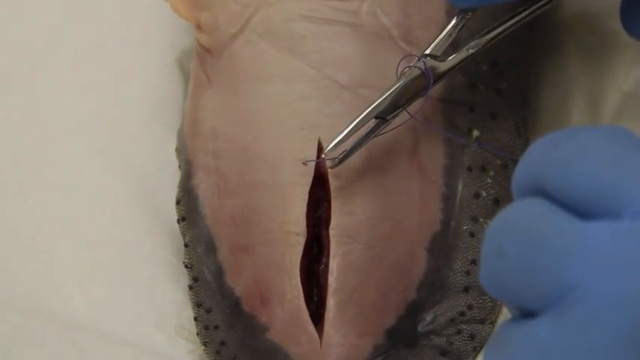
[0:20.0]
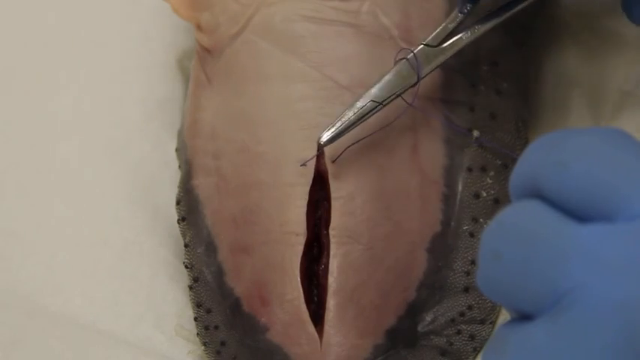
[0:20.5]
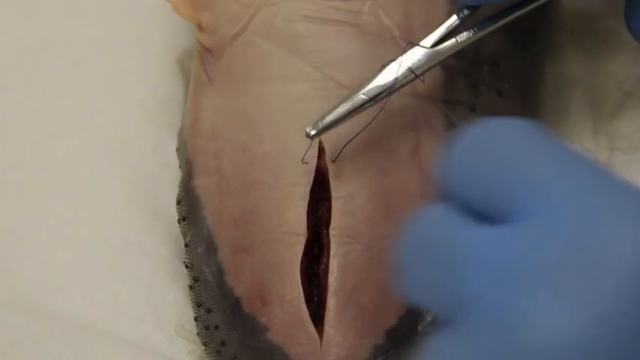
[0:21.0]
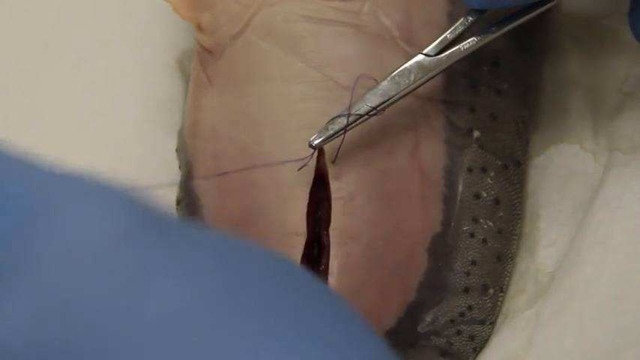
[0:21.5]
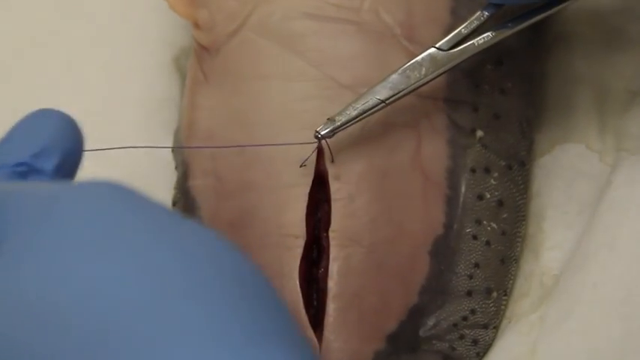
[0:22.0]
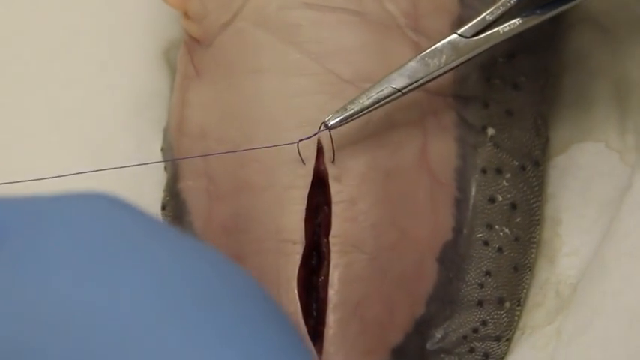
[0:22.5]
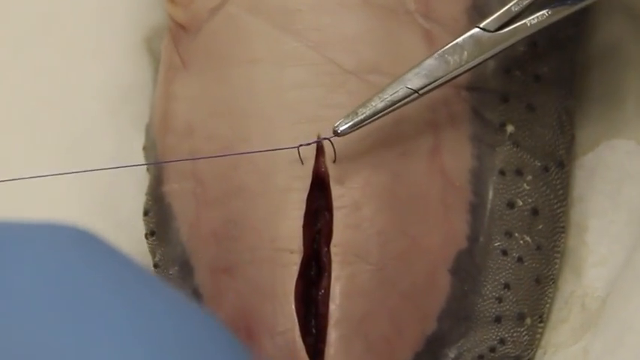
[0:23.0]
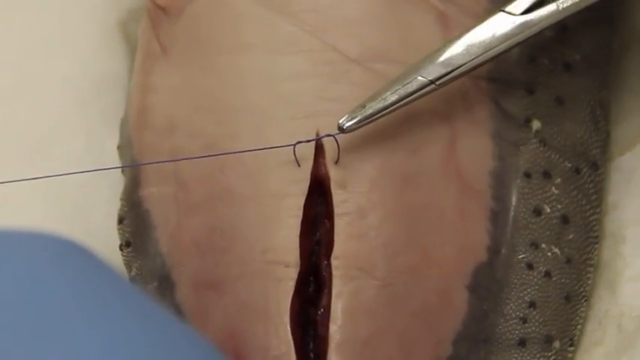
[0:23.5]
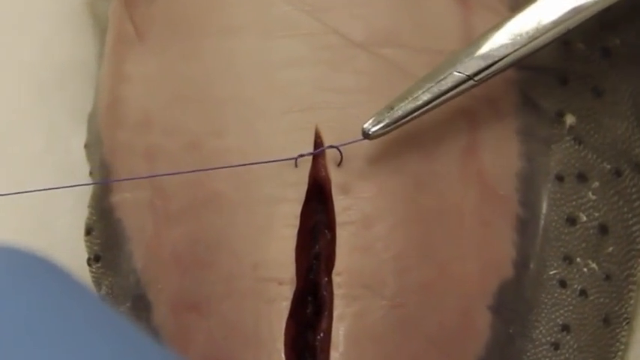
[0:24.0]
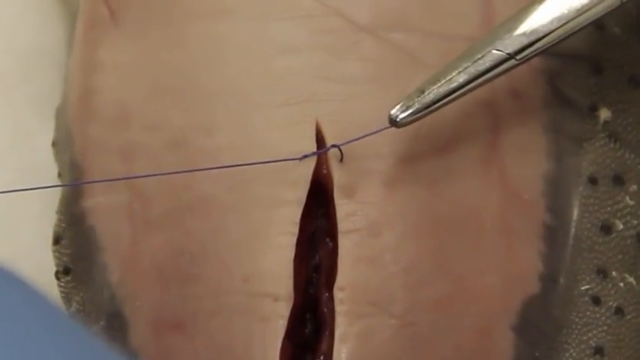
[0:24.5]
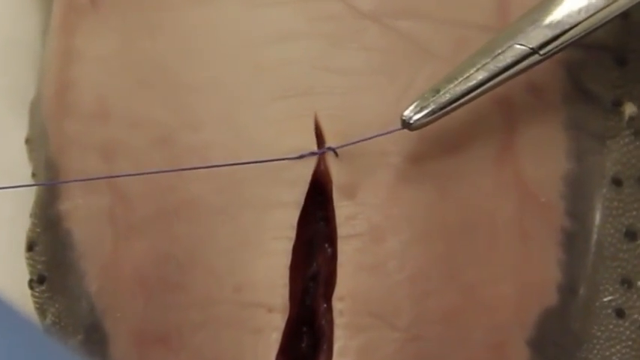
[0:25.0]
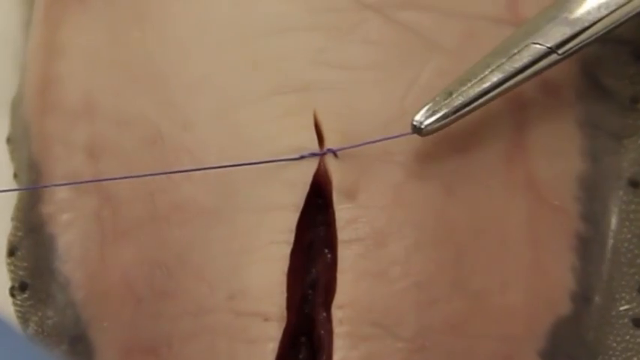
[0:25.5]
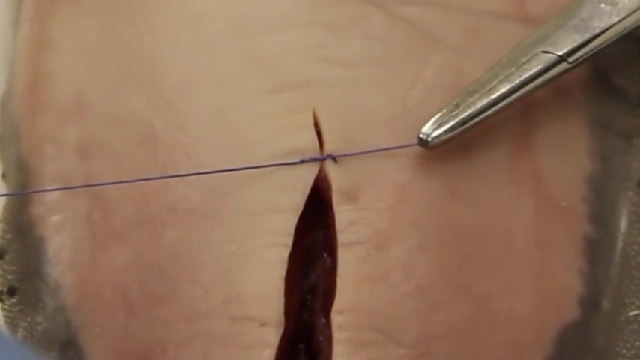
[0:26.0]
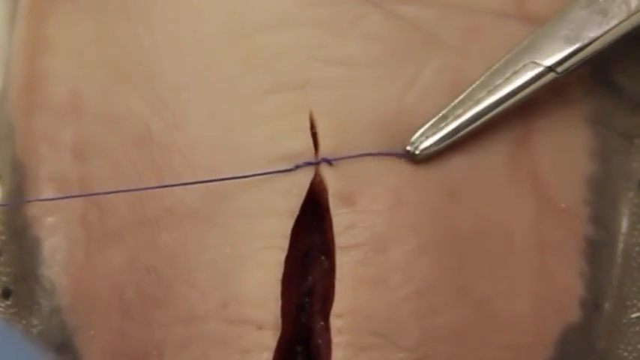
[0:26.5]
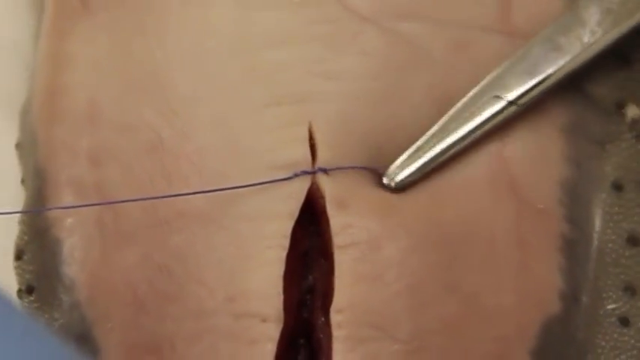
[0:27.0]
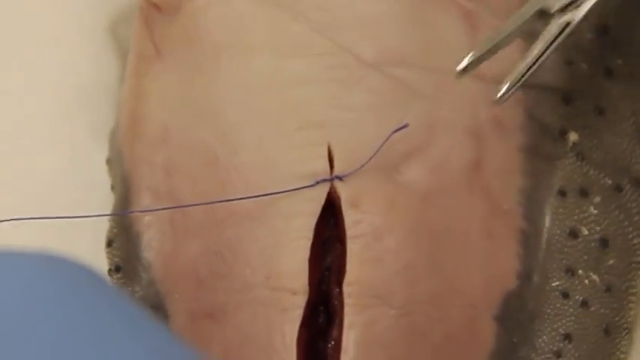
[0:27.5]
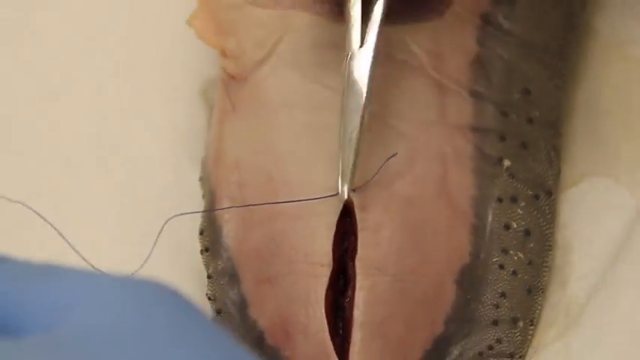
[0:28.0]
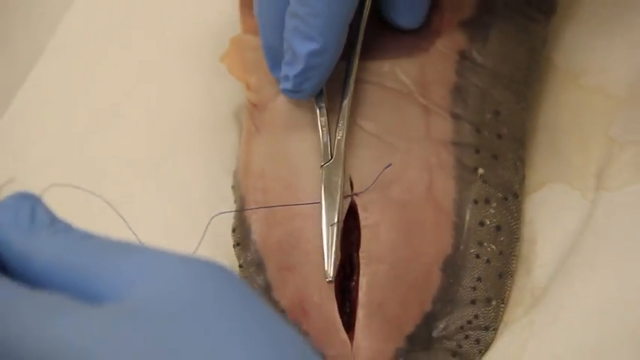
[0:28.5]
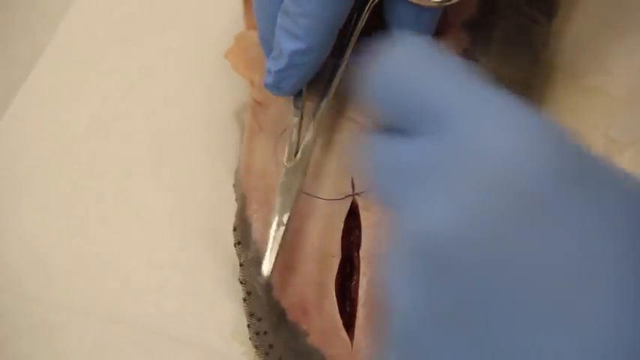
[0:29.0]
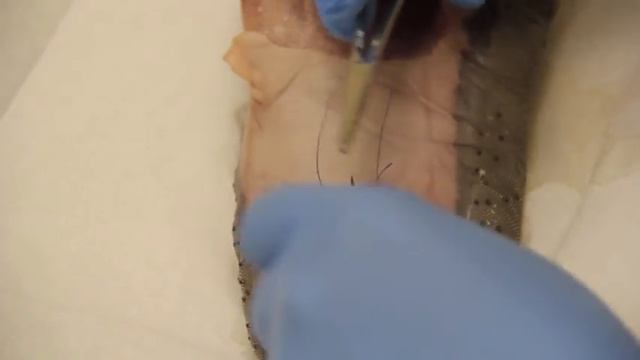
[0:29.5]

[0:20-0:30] The doctor ties a knot, the first one made like tying shoelaces. He works one part with what looks to be tweezers with a scissor handle and the other part with his gloved hand, pulling the surgical wound closer together. He pulls it tight, loops it through and pulls it tight again, one side with the tweezers and one side with his hand. He then loops the sutures around the base of the tweezers, which are suture tweezers with scissor-type handles. He pulls the wound tight and loops the suture around, beginning the square knot that closes the cauterized surgical wound.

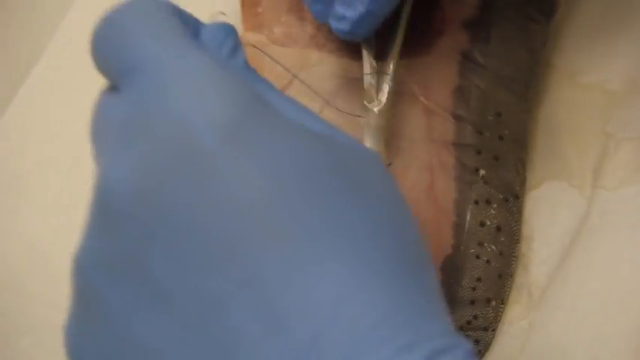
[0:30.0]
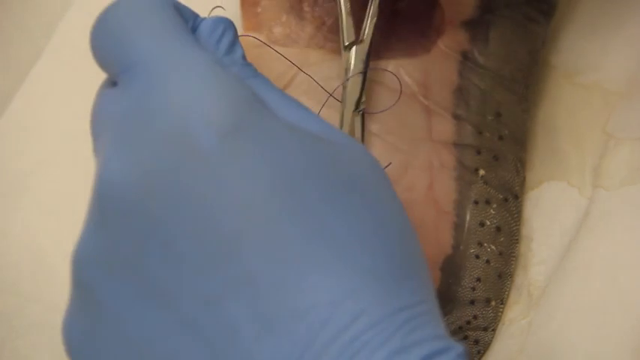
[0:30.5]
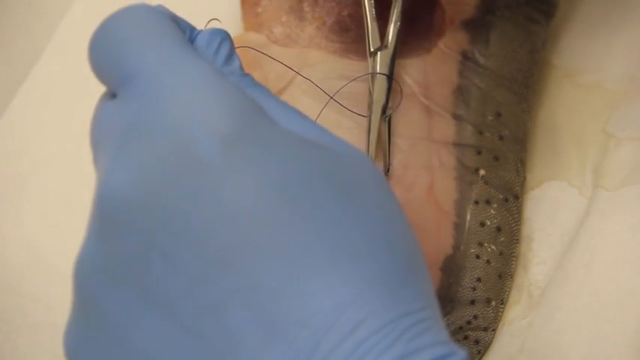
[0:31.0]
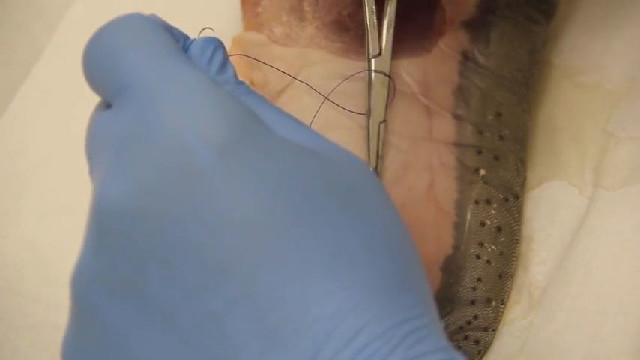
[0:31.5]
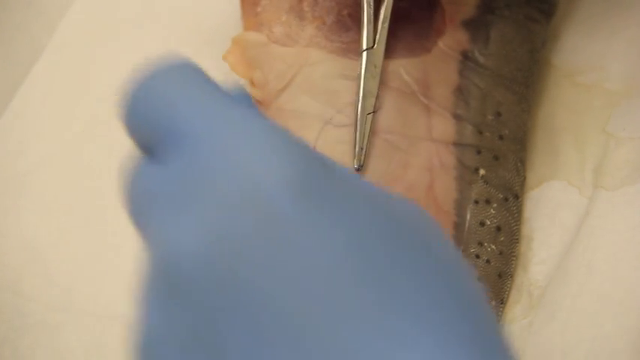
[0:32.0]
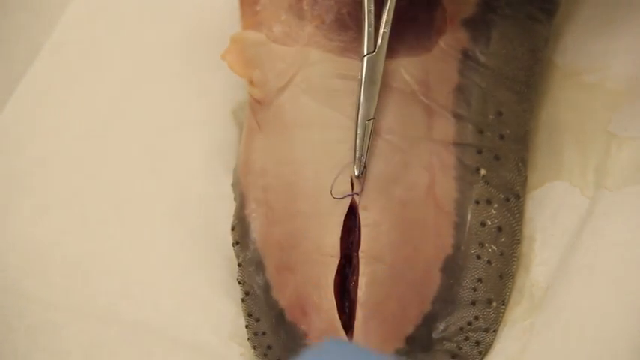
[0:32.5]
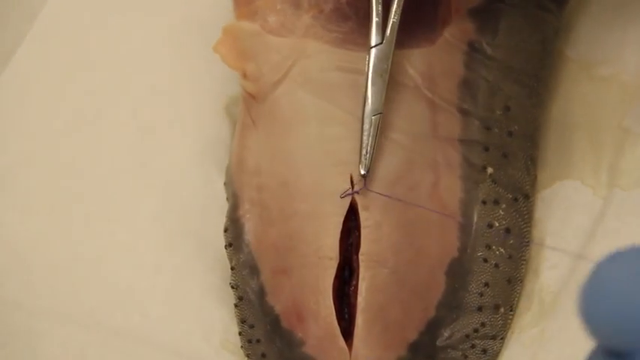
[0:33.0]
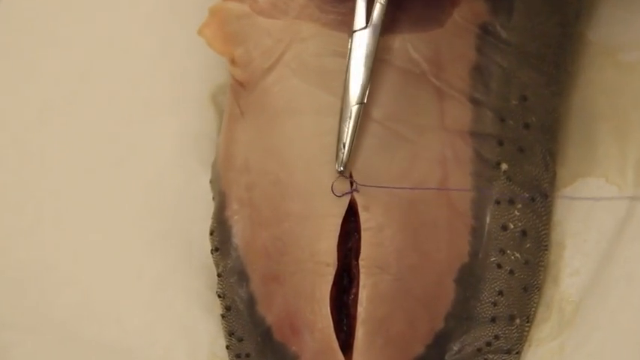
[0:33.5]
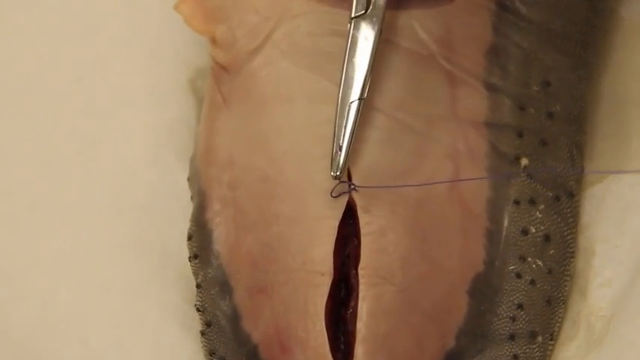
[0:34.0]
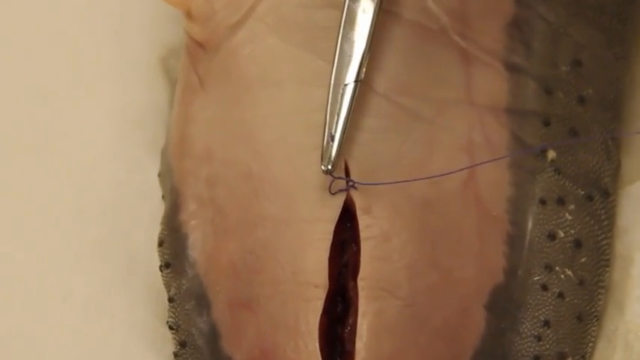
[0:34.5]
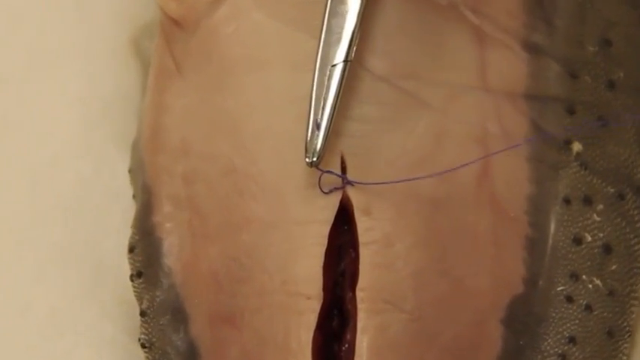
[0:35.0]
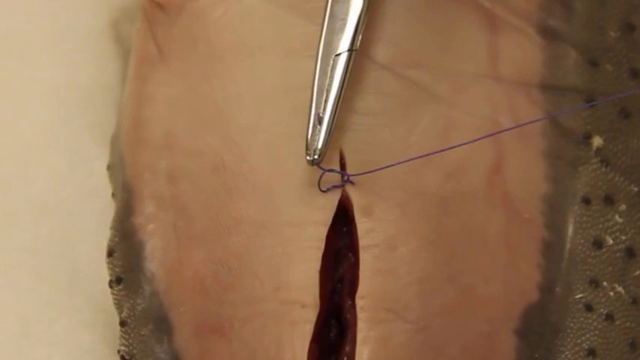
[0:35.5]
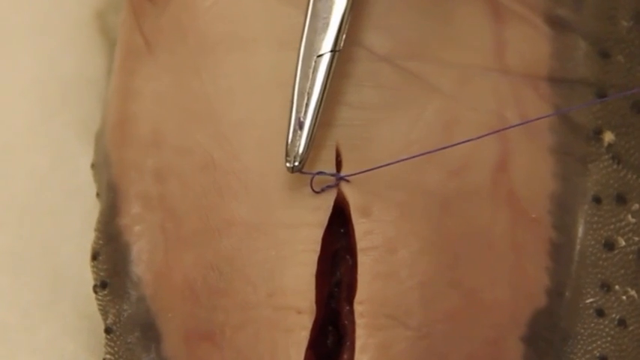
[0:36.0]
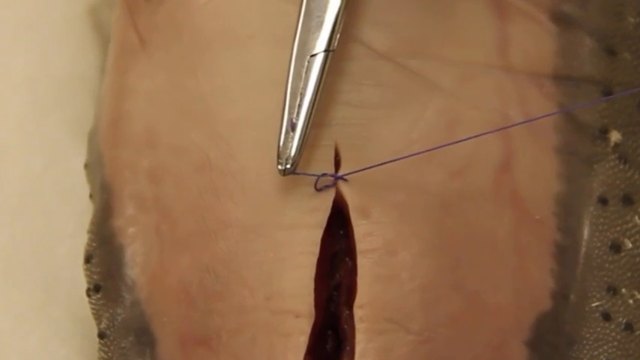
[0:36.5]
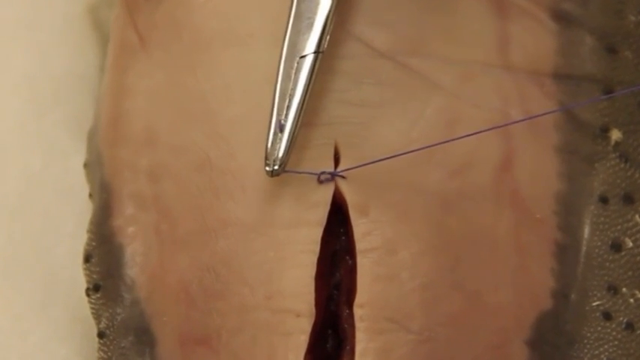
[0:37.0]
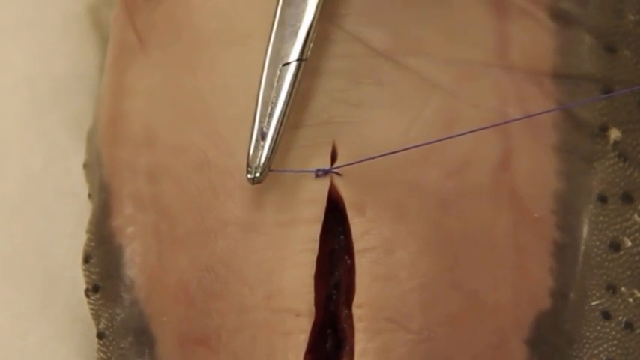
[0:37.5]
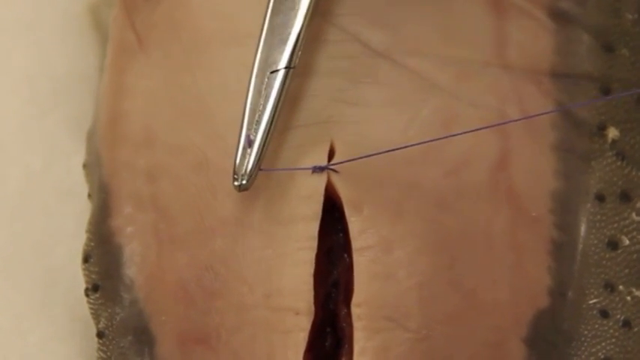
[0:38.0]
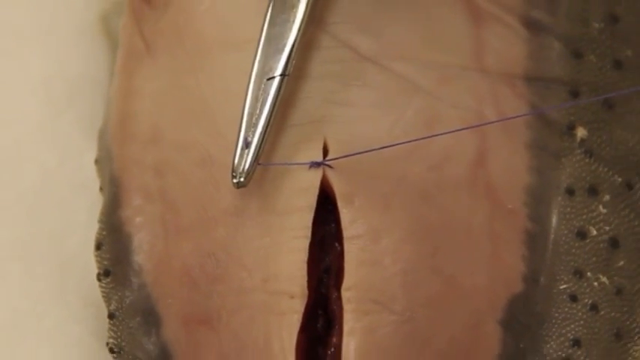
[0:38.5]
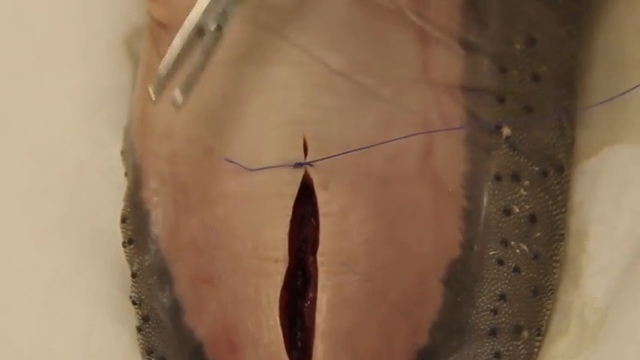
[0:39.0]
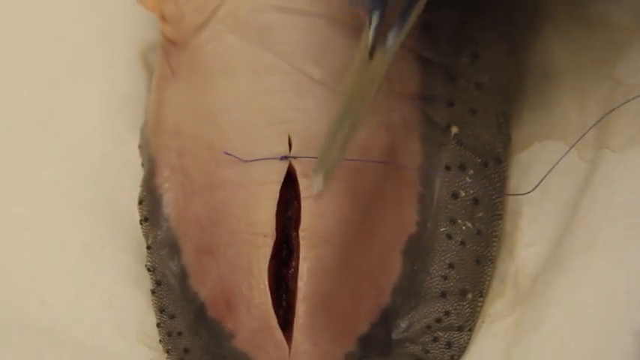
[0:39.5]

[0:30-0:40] The doctor ties a second knot on top of the first, still grasping one side of the suture with the scissor-handled tweezers and holding the other side with his hand. He pulls it tight, making a knot that pulls the wound tight, and completes the first stitch of the cauterized surgical wound. The work area is clean, with a sterile field for the doctor to work in, and the finished knot on the suture looks very neat.